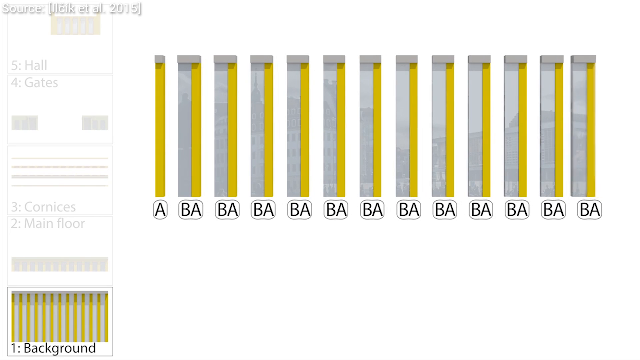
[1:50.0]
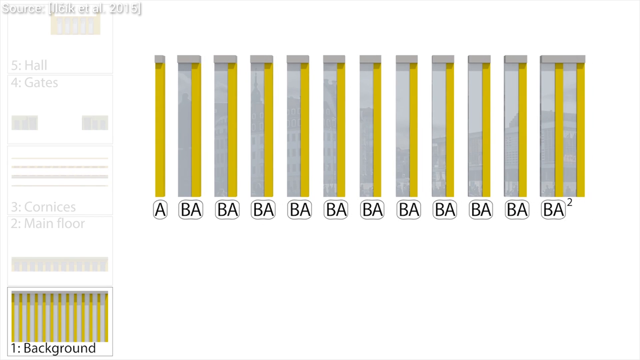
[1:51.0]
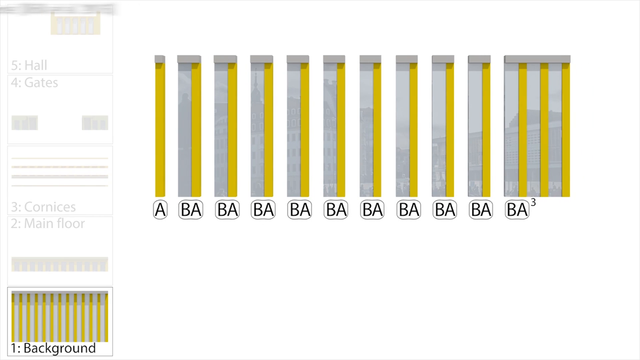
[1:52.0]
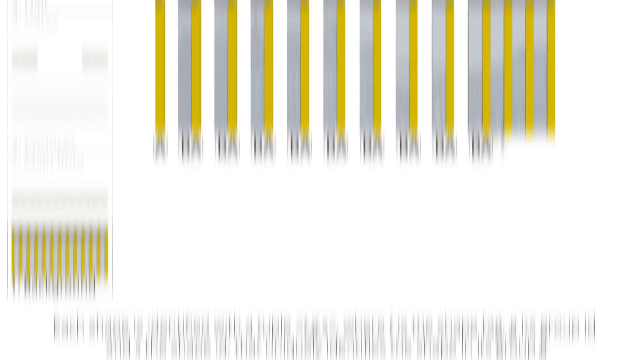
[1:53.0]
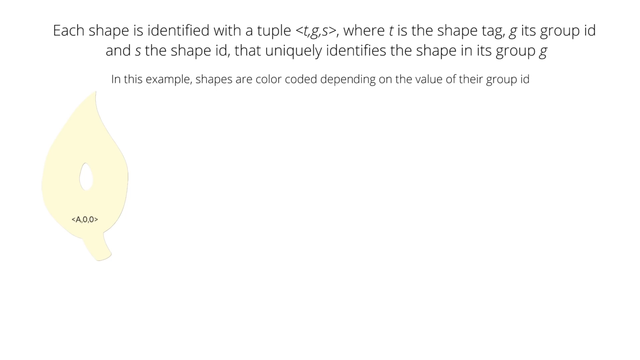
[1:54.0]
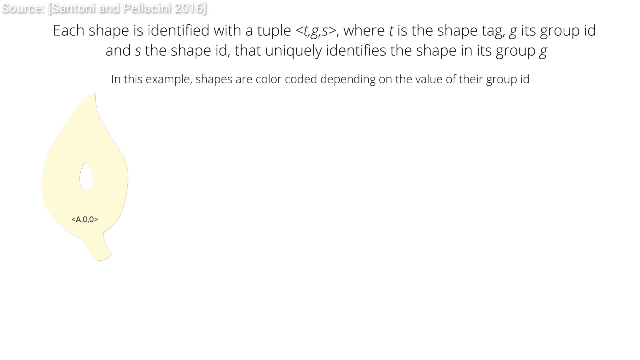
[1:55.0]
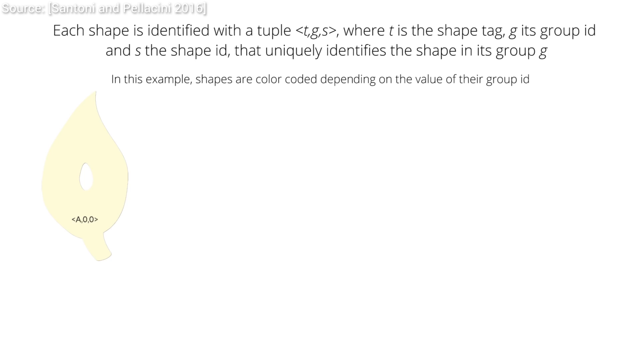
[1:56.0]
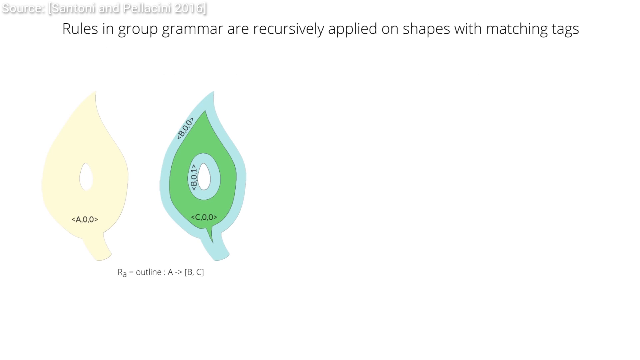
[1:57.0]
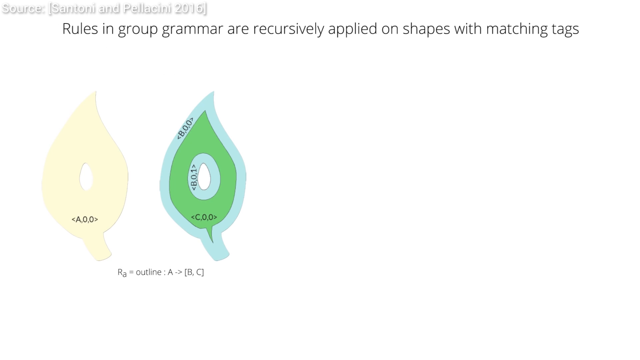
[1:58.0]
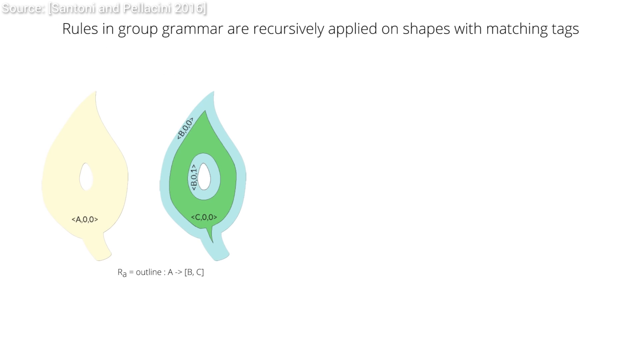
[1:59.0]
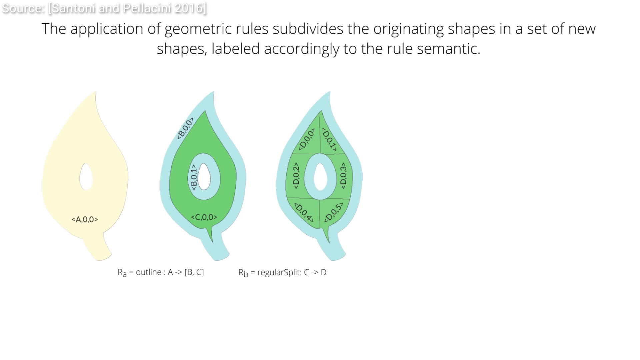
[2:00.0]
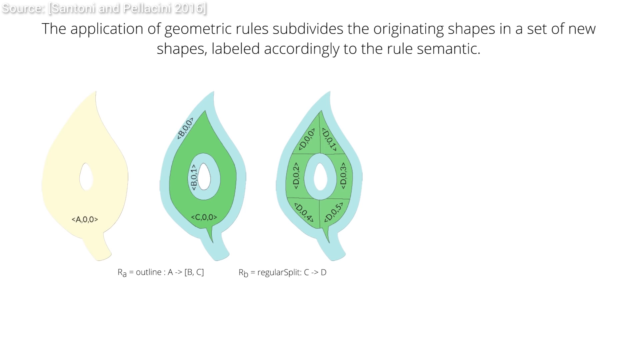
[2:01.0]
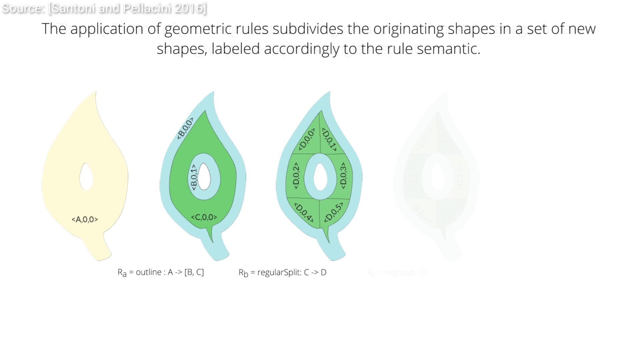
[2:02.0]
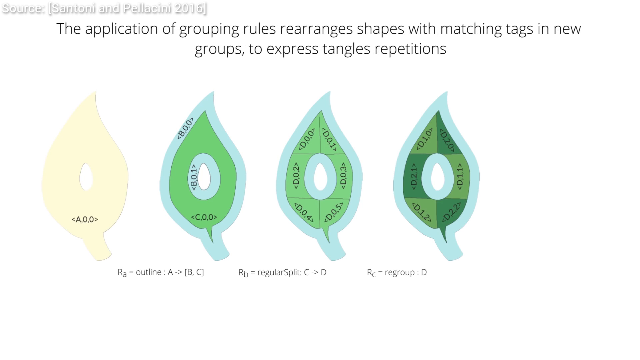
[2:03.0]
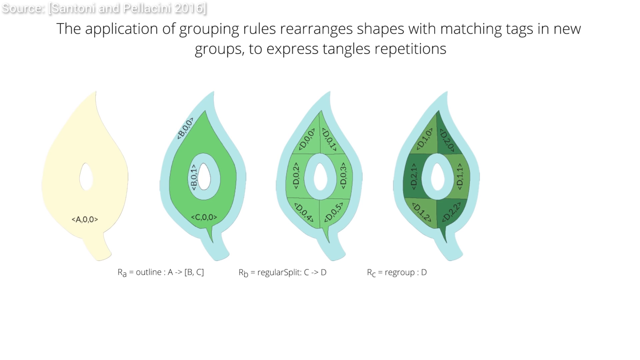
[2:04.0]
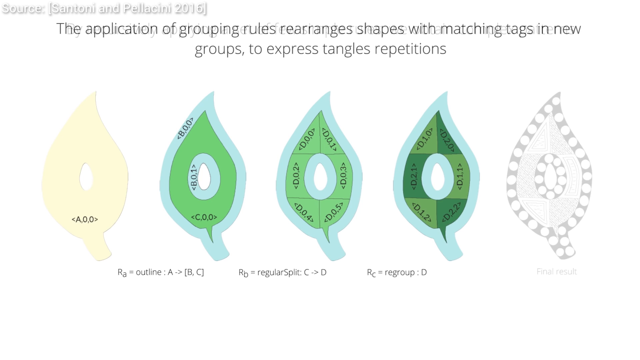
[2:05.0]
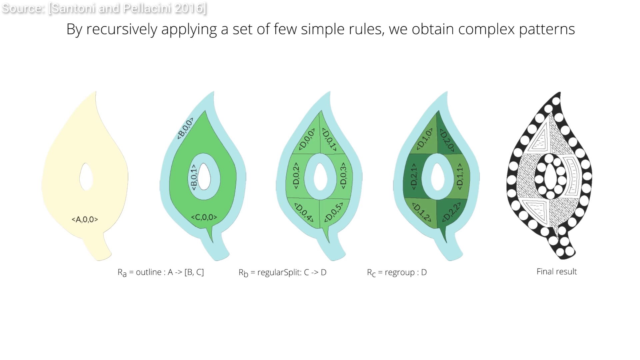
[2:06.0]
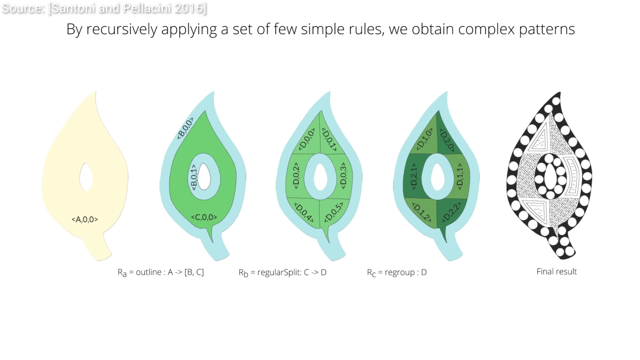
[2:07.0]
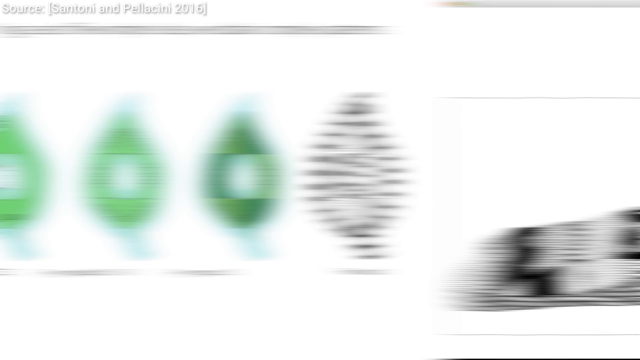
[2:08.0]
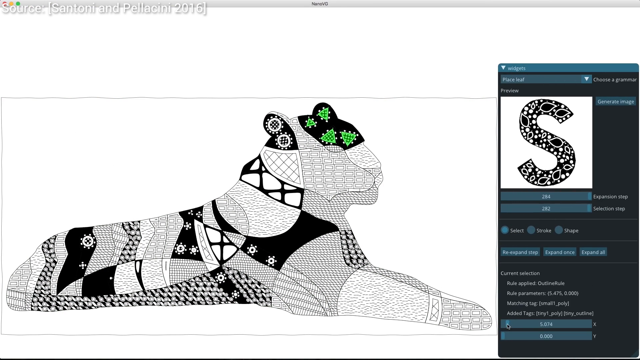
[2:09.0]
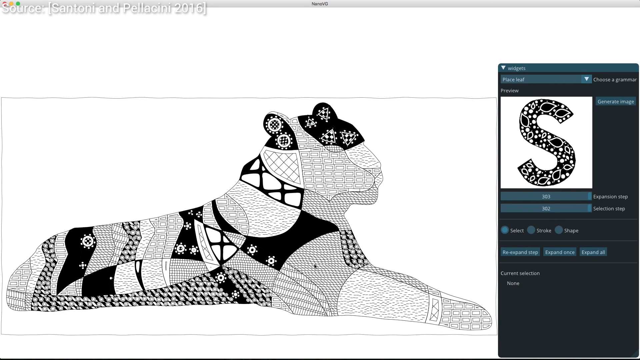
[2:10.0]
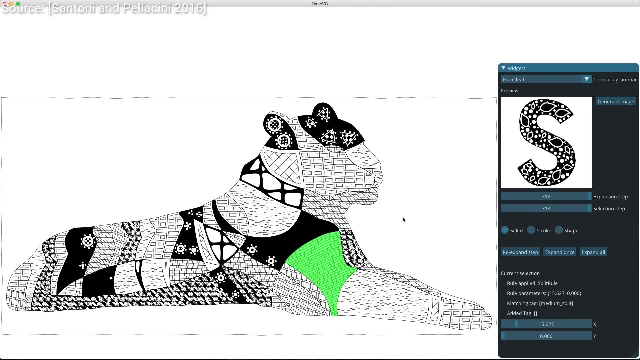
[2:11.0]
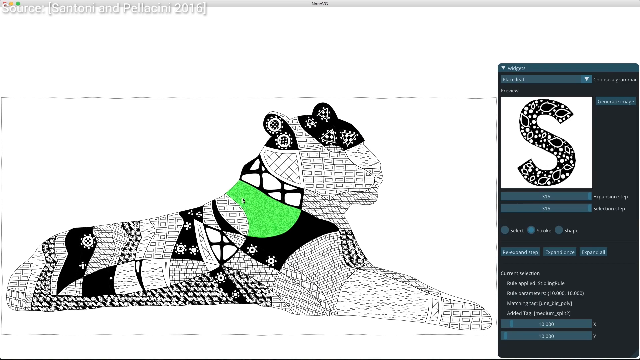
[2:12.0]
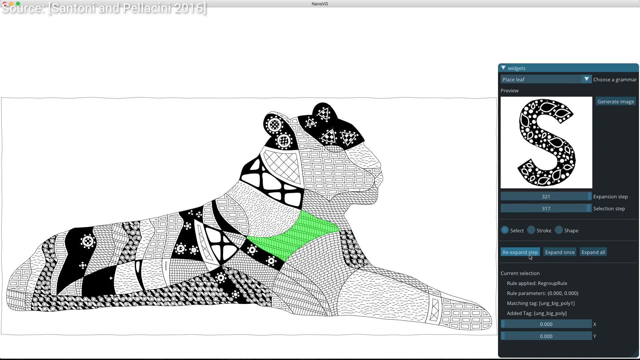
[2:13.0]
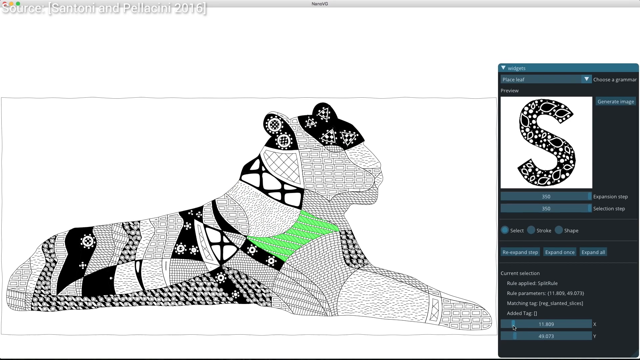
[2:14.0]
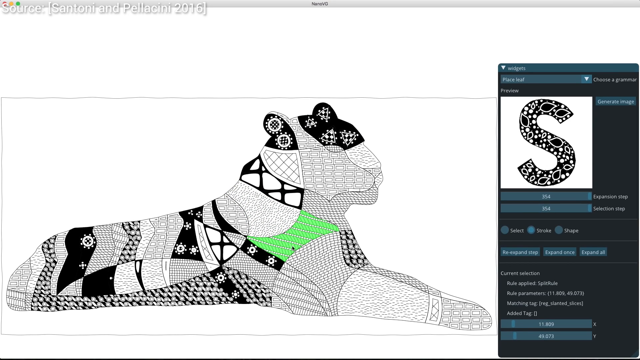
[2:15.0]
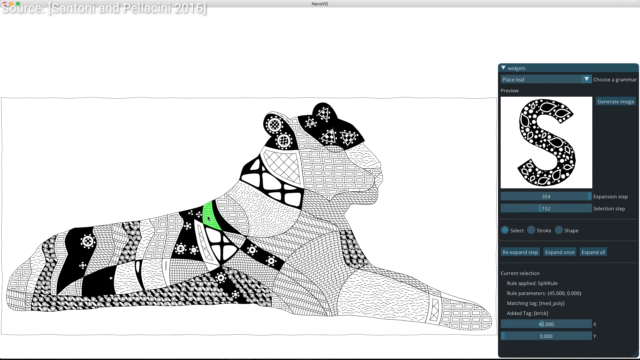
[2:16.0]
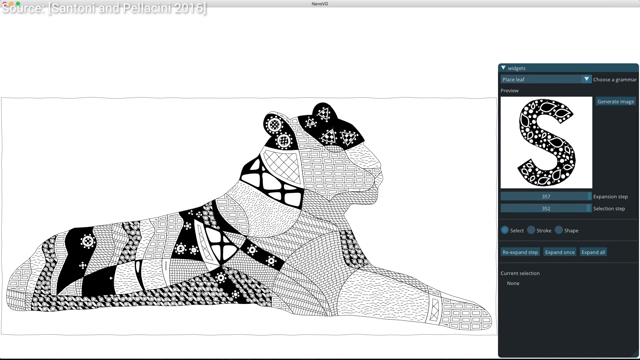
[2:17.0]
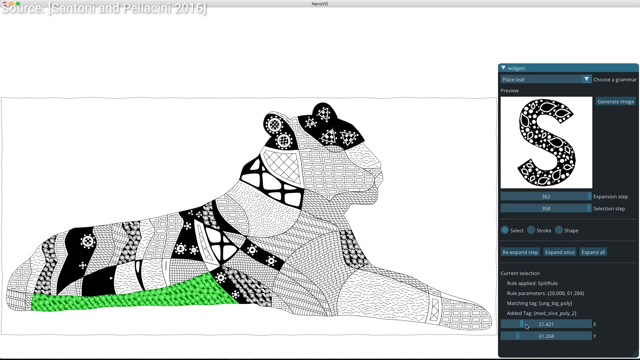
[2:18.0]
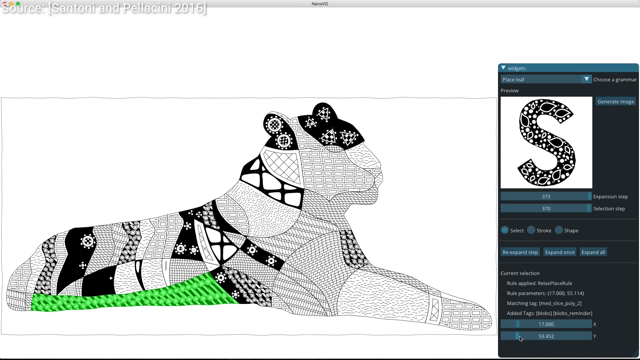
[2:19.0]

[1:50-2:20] The parts of the wall continue, and they combine on the right side. The scene changes, and text at the top reads "each shape is defined with a tuple, (t,g,s) where t is the shape tag, g its group id, and s is the shape ID that ultimately identifies the shape in its group G. In this example, shapes are color-coded depending on the value of their group ID." On the left are four pictures of what look like leaves, and in the middle five pictures of leaves, labeled with numbers and letters. On the right is the final result, a black-and-white image of a leaf. The scene changes to a lion with many black-and-white design patterns on it, and to the right an open software editing window. One of the shapes on the lion turns green; certain areas on the lion are selected, and each selected area changes color.